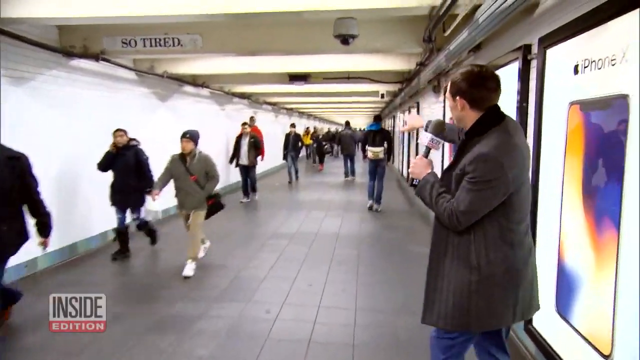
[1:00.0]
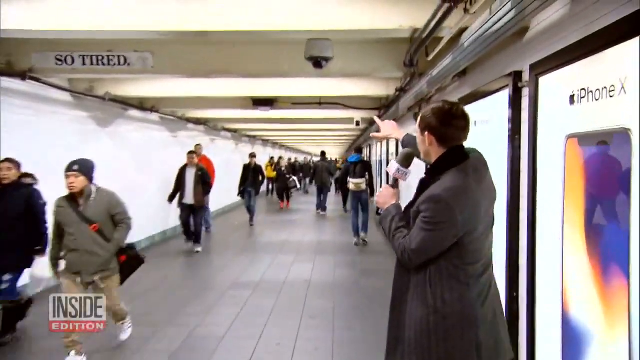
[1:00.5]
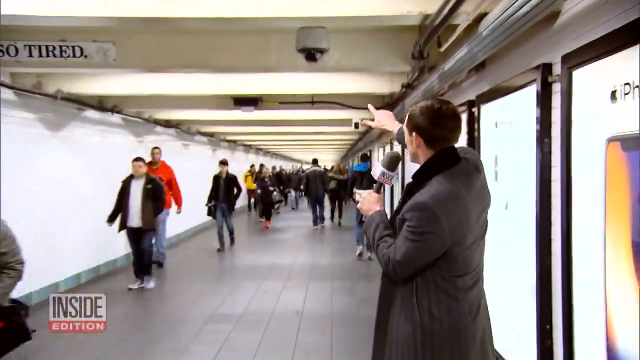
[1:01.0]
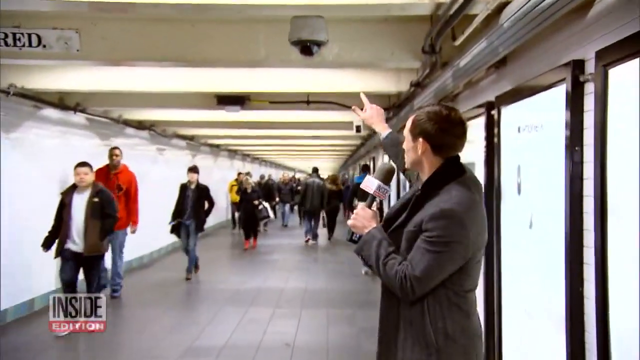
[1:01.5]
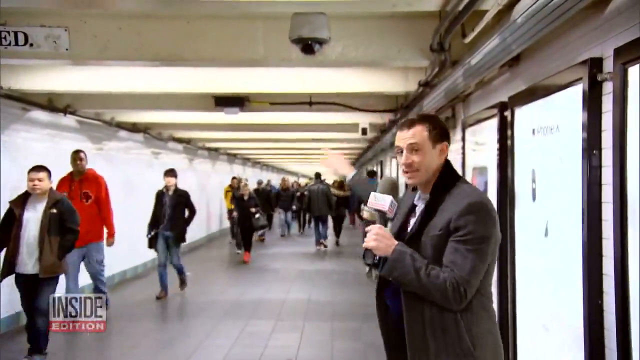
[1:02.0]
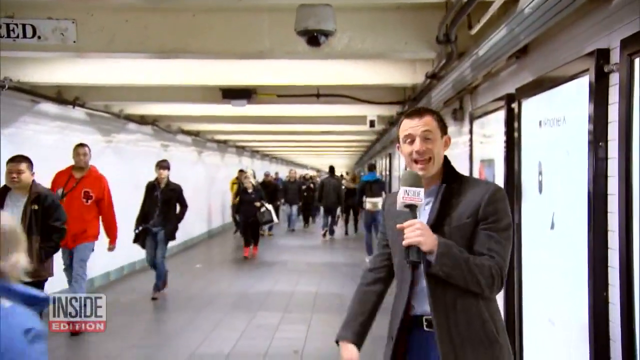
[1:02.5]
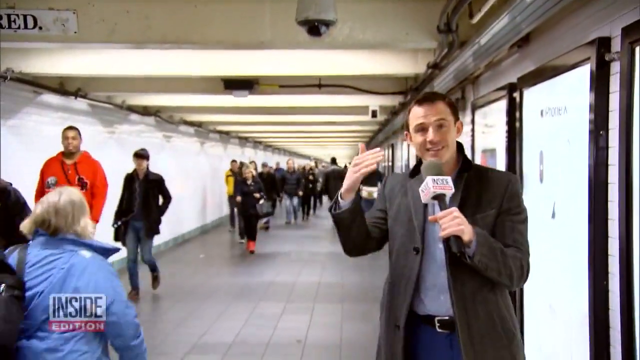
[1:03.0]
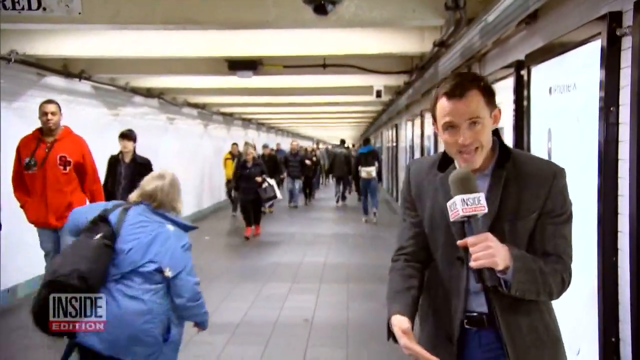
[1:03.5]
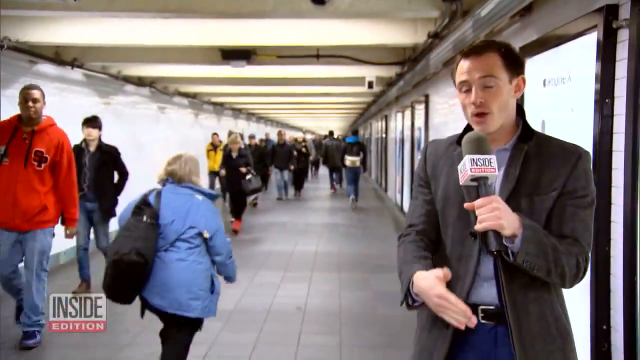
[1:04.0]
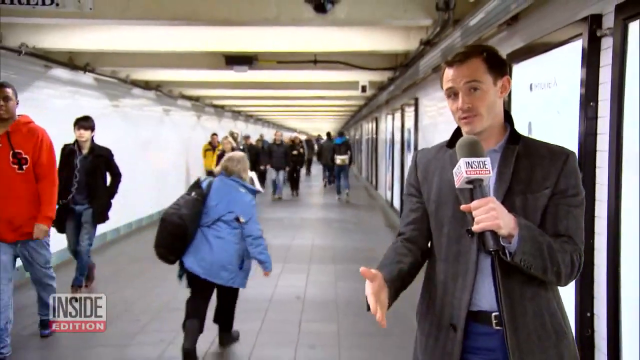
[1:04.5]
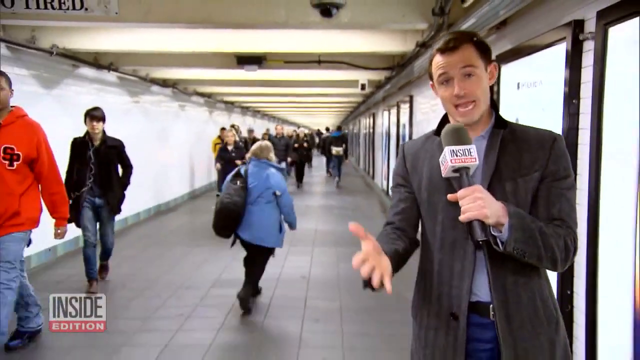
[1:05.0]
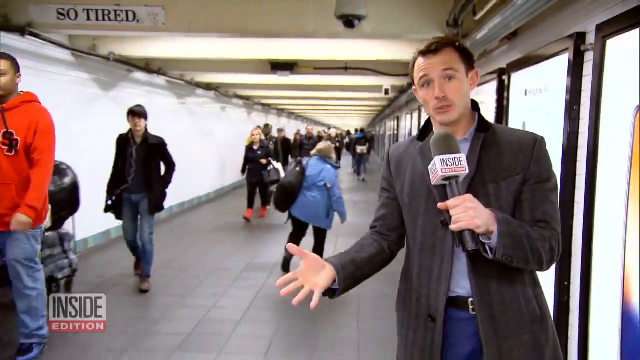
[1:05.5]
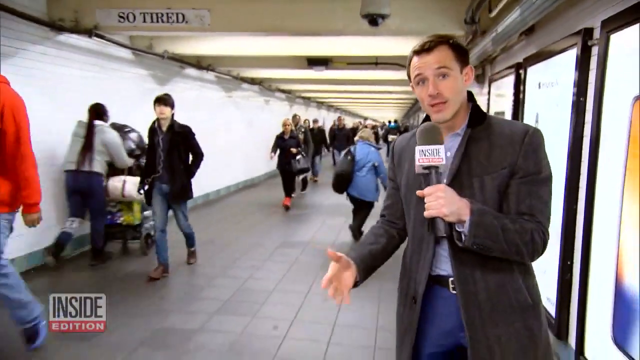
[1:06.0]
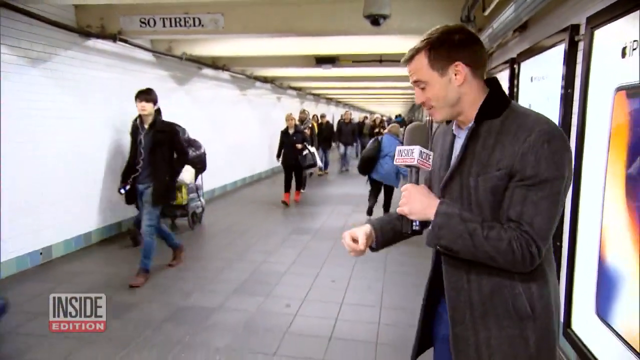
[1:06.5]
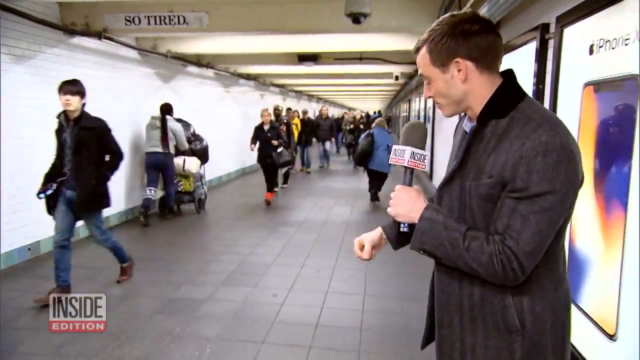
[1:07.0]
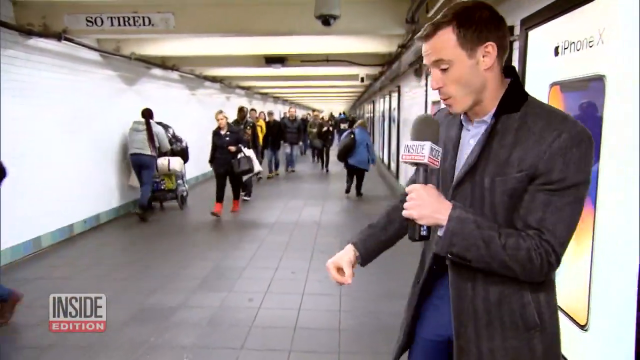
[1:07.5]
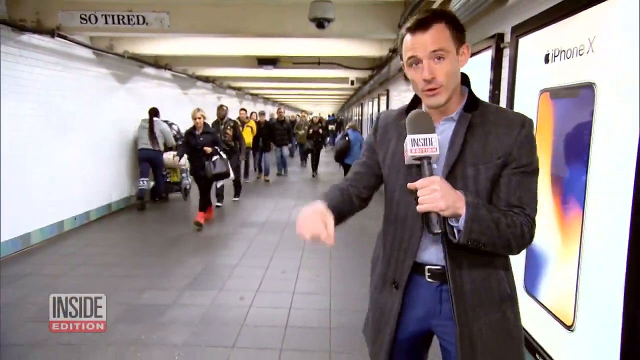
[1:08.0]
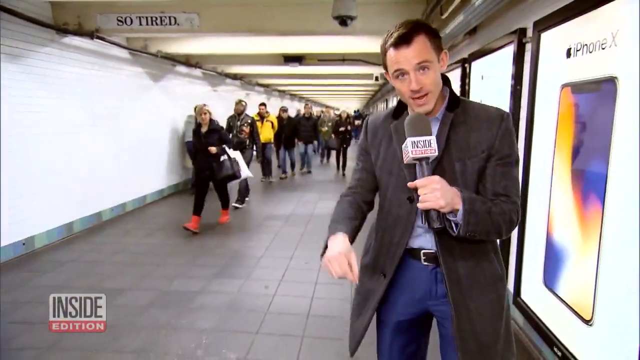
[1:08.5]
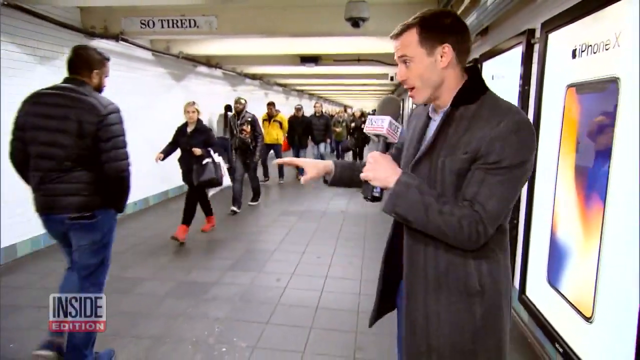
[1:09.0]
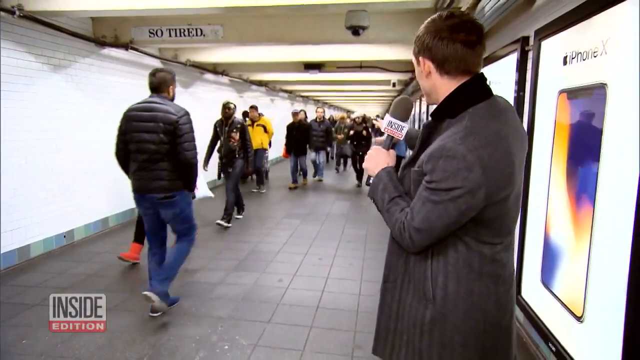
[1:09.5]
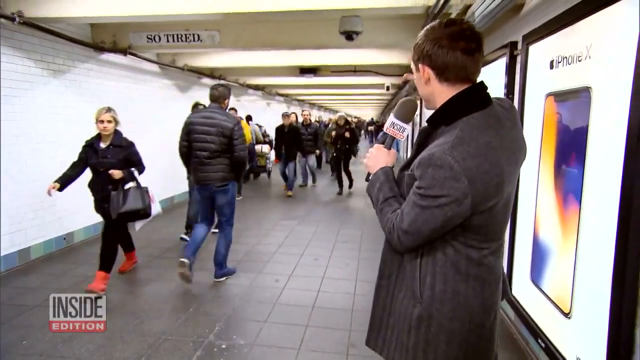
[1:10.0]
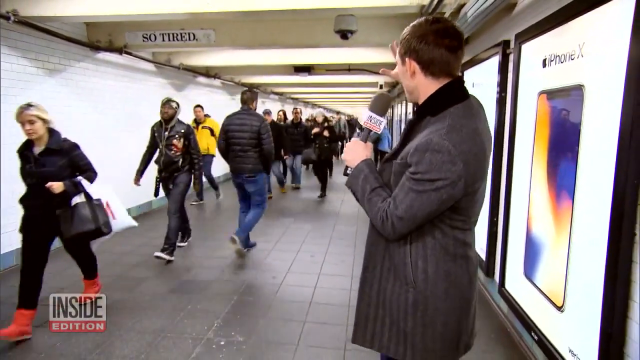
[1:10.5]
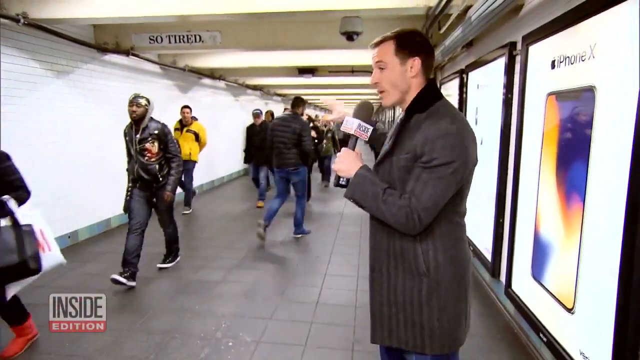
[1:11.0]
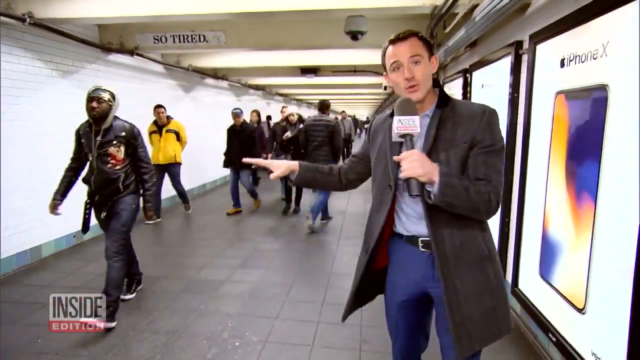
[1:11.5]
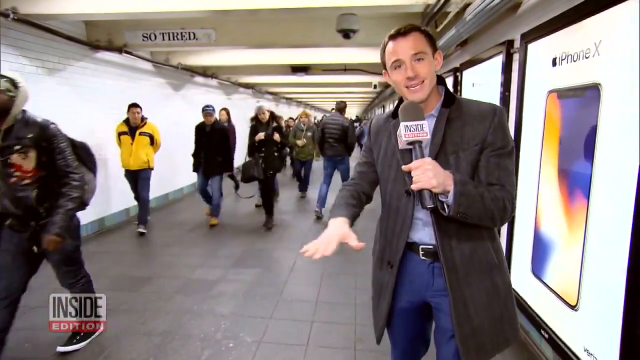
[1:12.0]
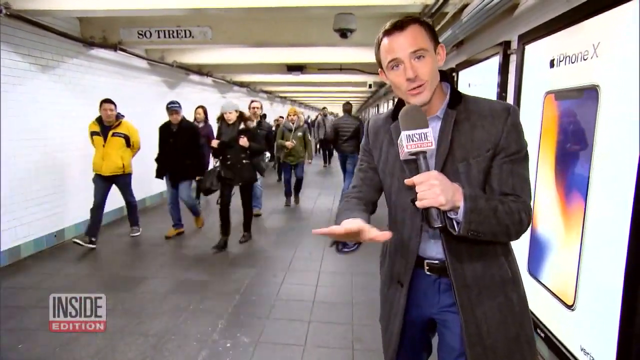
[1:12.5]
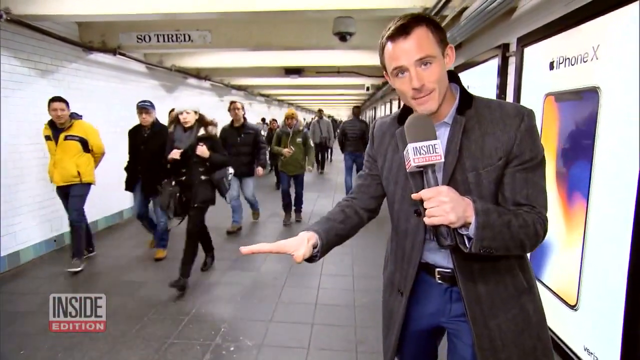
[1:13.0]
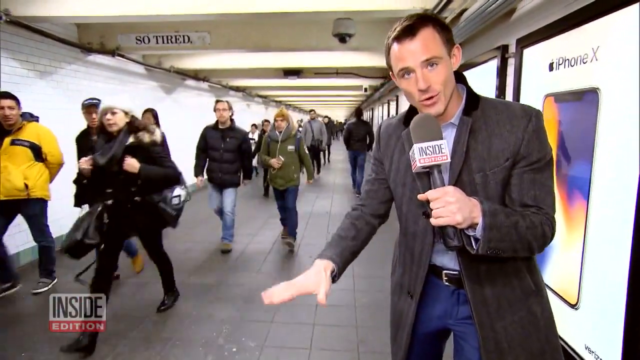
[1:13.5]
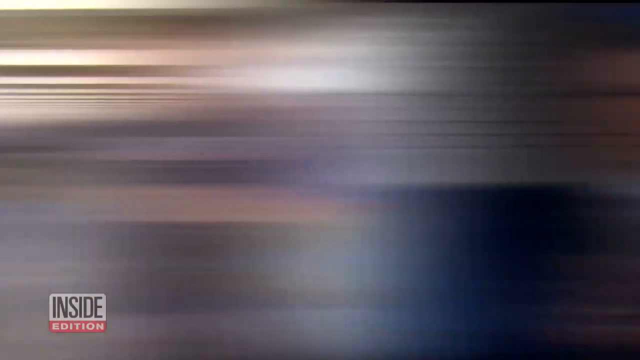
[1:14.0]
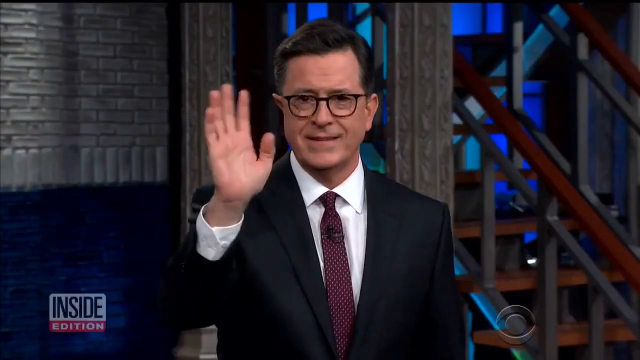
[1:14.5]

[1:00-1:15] The same Inside Edition reporter, in blue jeans, a belt and a longish gray coat, holds the microphone and speaks into it. He gestures with his hands, pointing back down the length of the bus terminal, sometimes down at the tiled floor beneath him, and up at a CCTV camera suspended from the ceiling. Behind him are many ads for different products, most clearly an iPhone X ad directly behind his back. Probably 30 or 40 people walk in both directions near where he stands. Then footage from a different talk show is spliced over his report: Stephen Colbert at his show, perhaps doing his monologue, makes an expression and waves his right hand, sort of slapping his right arm down, the way someone would to say it's no big deal, as if waving off what the reporter is saying.